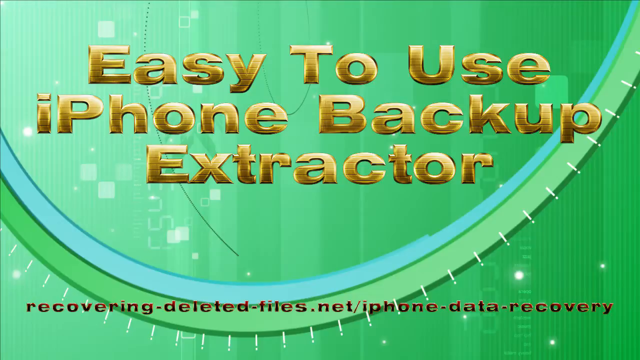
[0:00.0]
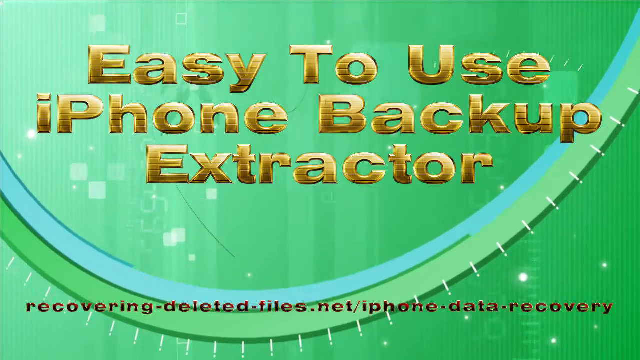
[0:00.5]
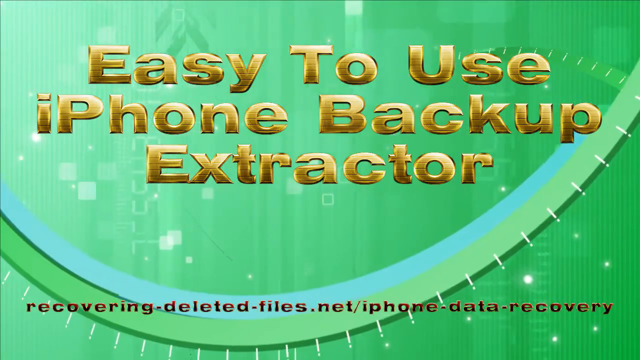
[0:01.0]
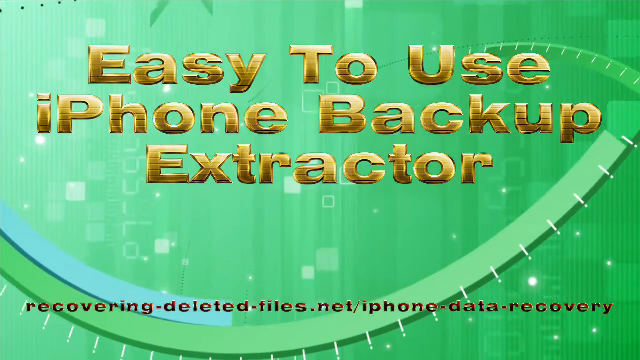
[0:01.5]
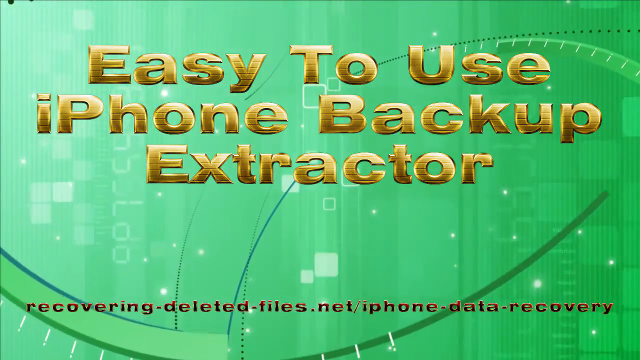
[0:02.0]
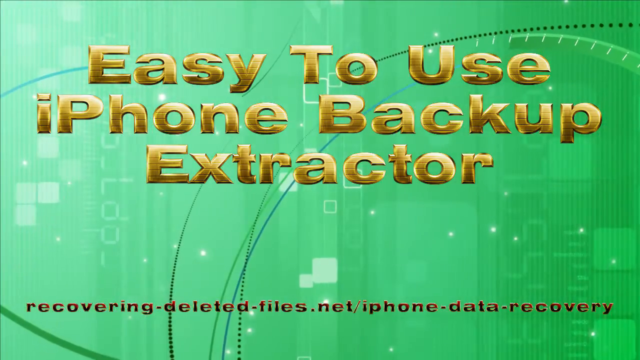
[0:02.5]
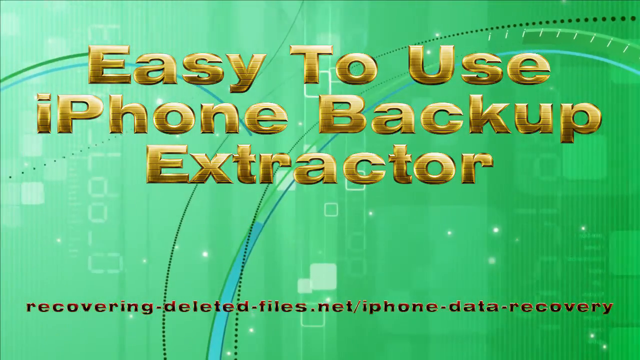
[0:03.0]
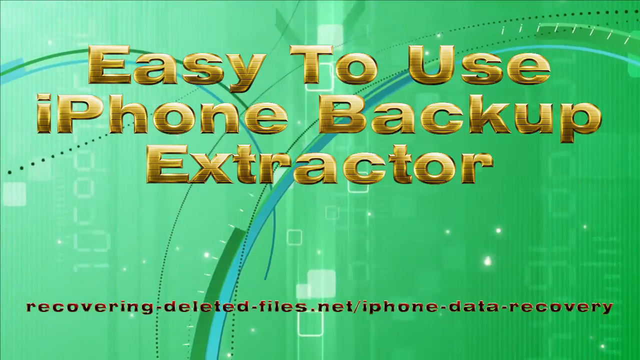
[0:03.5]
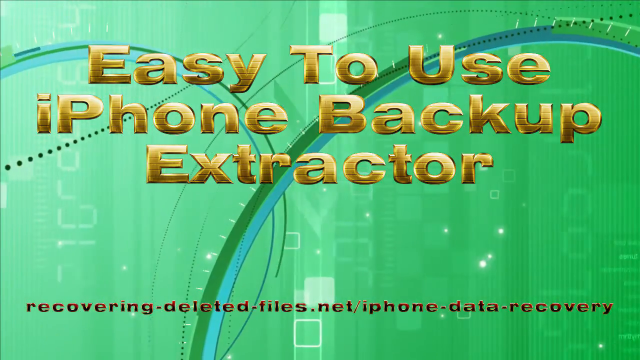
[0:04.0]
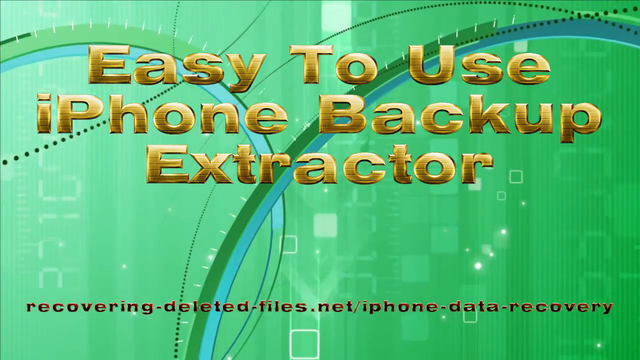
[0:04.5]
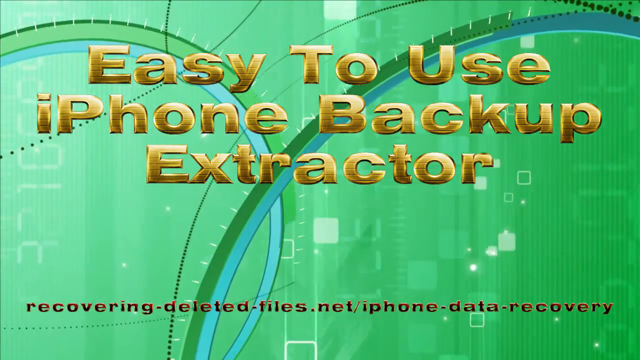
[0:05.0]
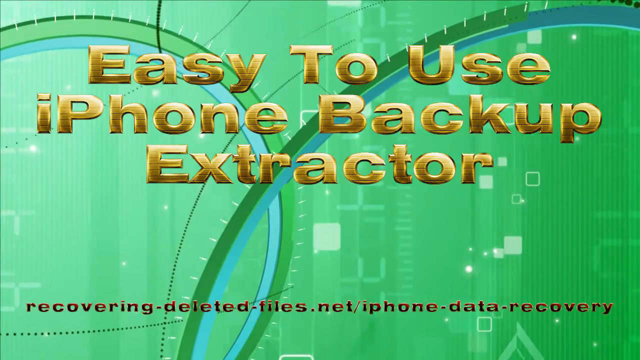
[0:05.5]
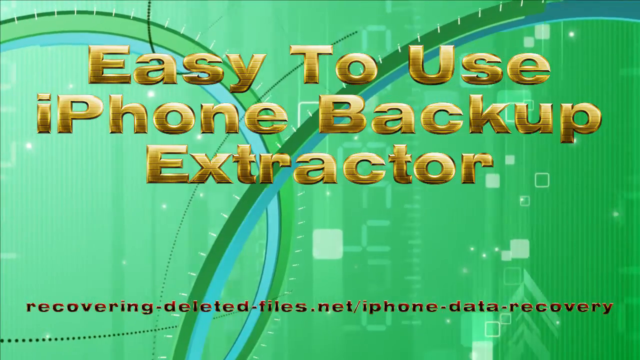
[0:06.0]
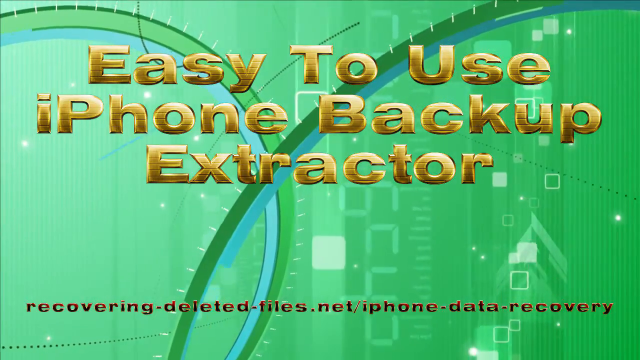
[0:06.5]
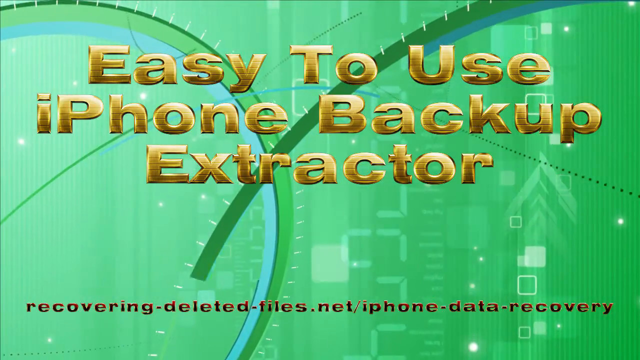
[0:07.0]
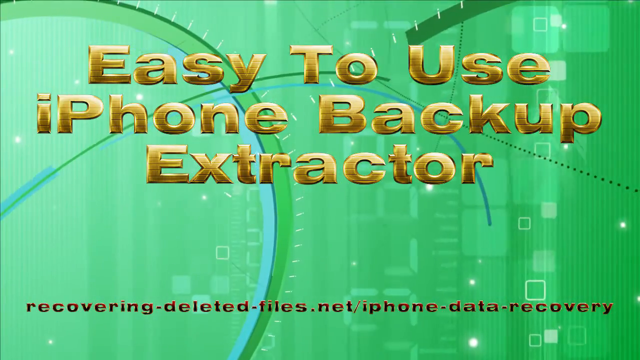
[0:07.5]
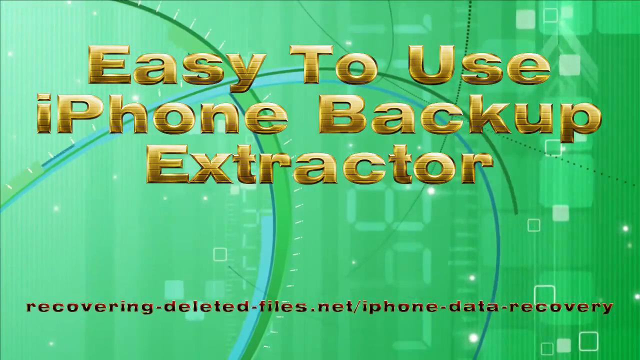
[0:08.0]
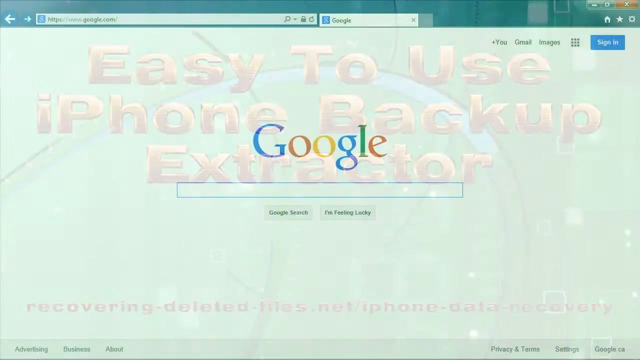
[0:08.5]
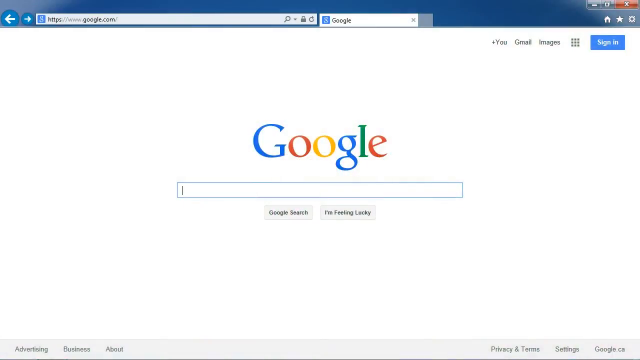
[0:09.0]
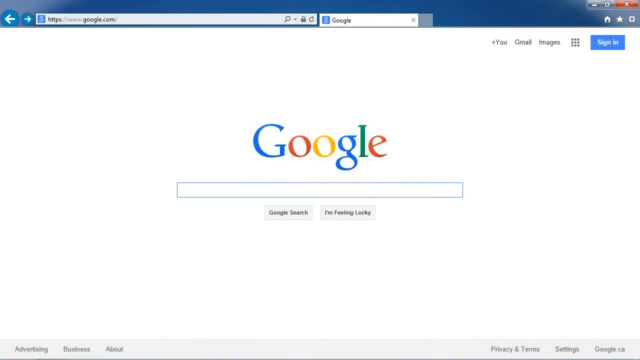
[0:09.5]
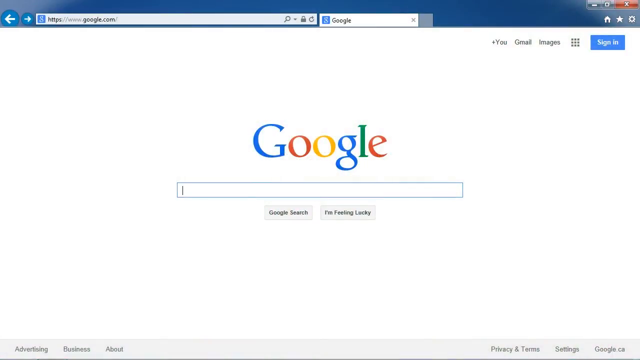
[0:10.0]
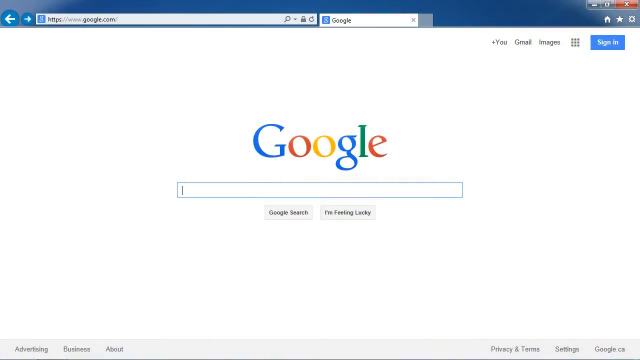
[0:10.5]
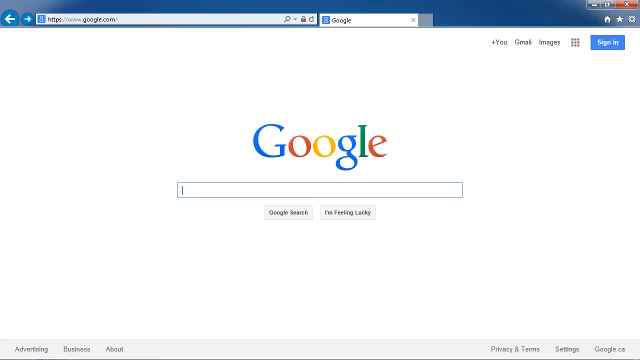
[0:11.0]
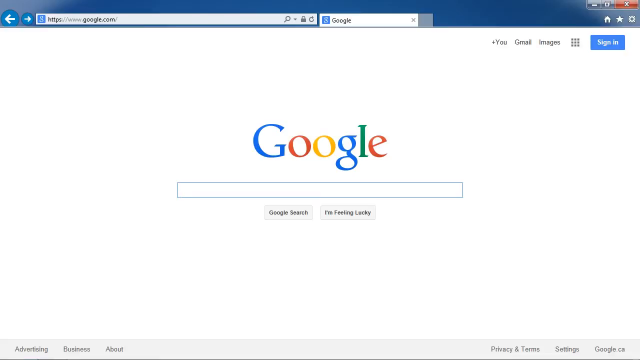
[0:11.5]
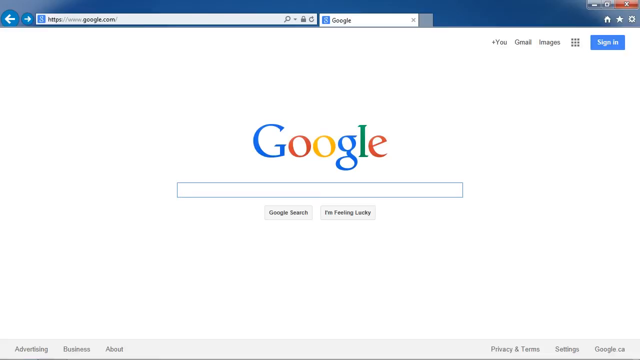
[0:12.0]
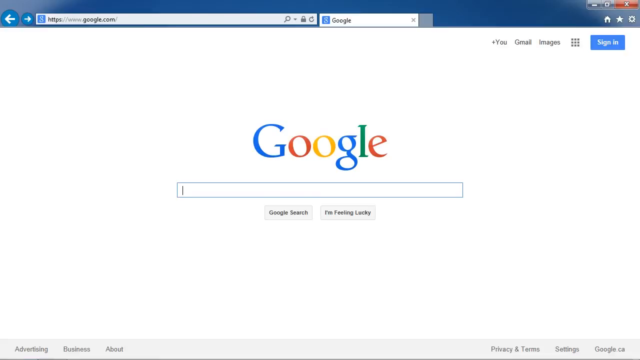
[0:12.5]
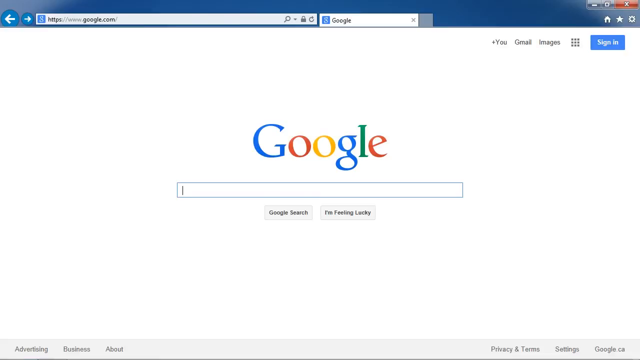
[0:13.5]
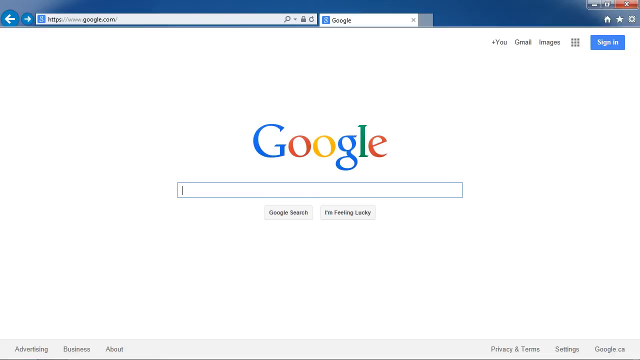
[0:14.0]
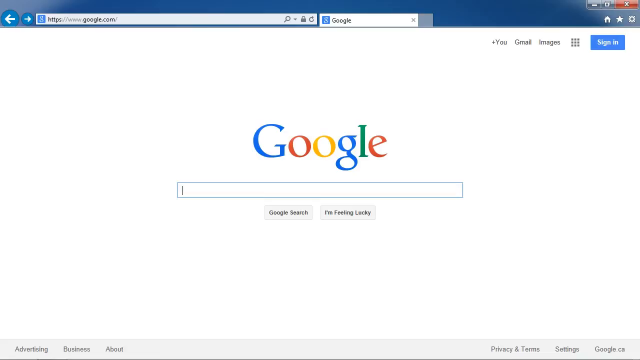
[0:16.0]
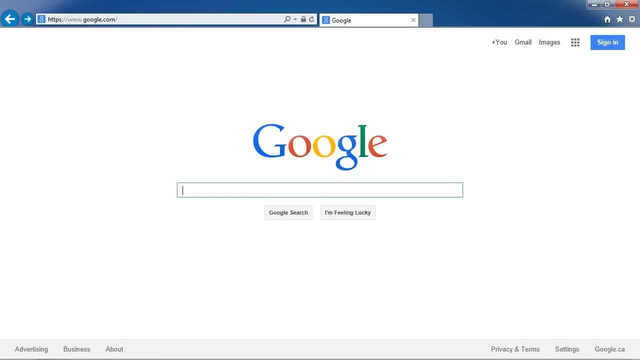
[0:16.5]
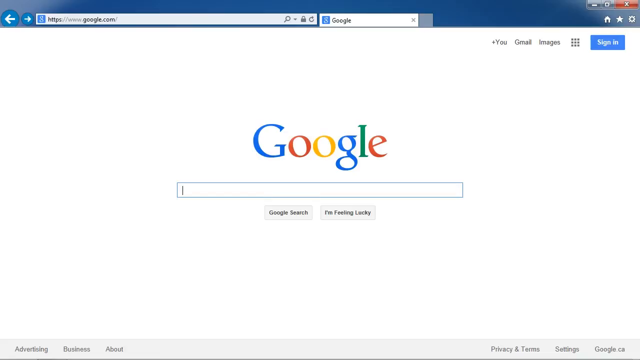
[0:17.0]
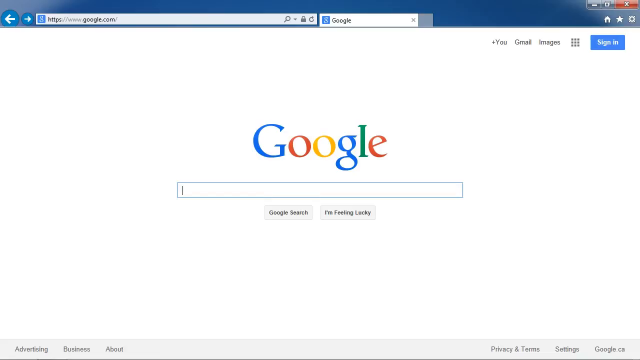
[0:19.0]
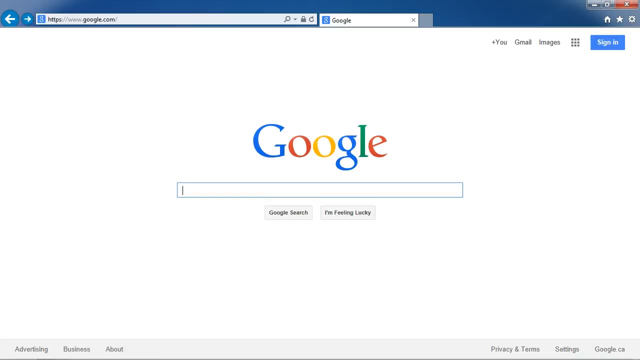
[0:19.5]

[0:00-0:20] A screen with a green background shows gold text reading "easy to use iPhone backup extractor," and below it "recovering-deleted-files.net/iPhone-data-recovery." The green background is animated, with various shapes swirling and moving around on it, some of which look like numbers. The view then changes to a typical Google search page with a multicolored Google logo and a search bar. The page stays on Google without anything being entered into the search bar yet, apparently taking a long look at the standard Google.com page. The logo reads "Google": the G is blue, the first O is red, the other O is yellow, the lowercase g is blue, the L is green, and the E is red.